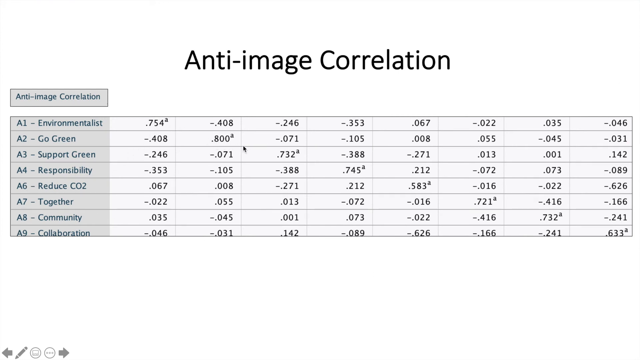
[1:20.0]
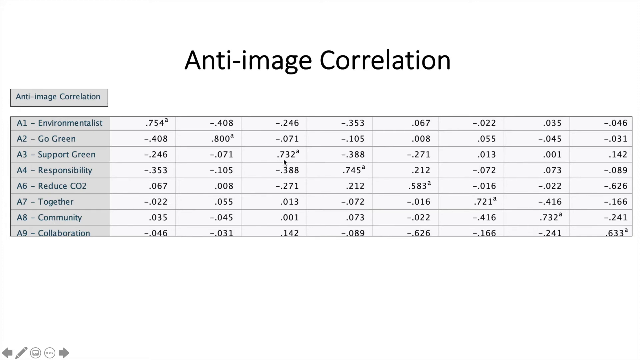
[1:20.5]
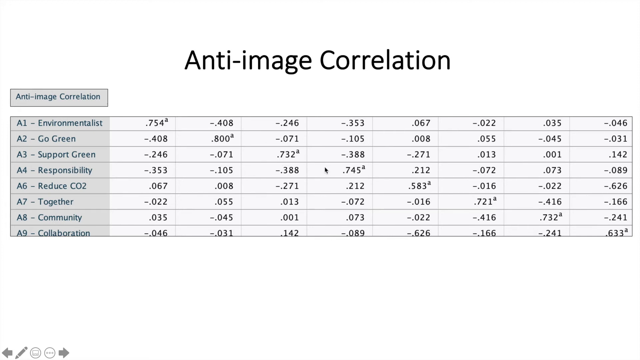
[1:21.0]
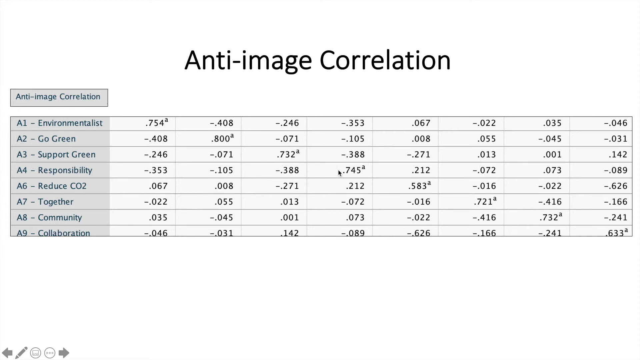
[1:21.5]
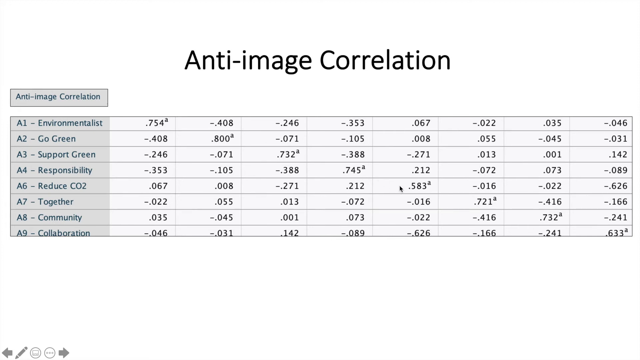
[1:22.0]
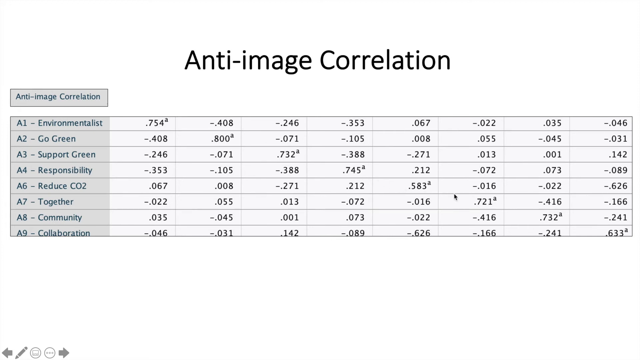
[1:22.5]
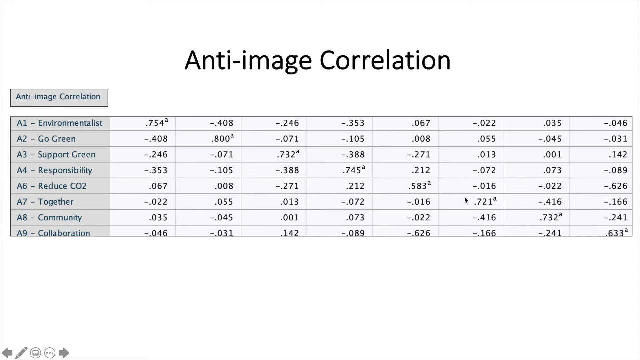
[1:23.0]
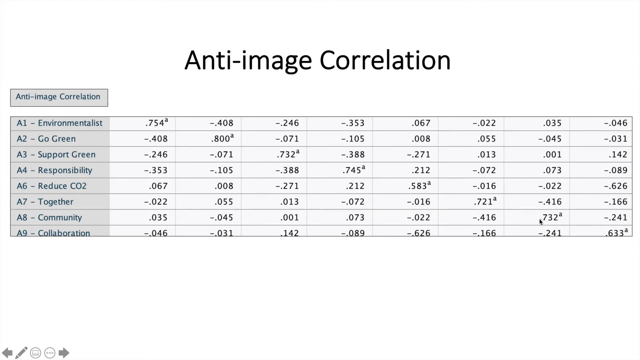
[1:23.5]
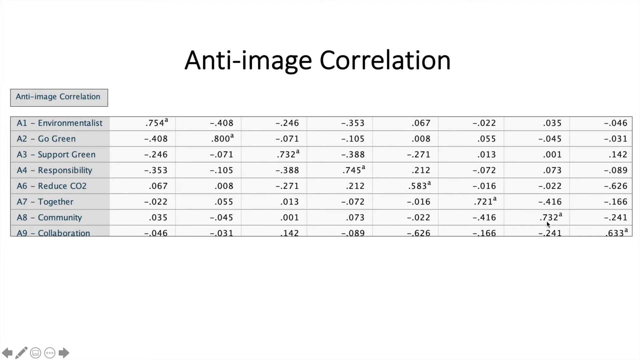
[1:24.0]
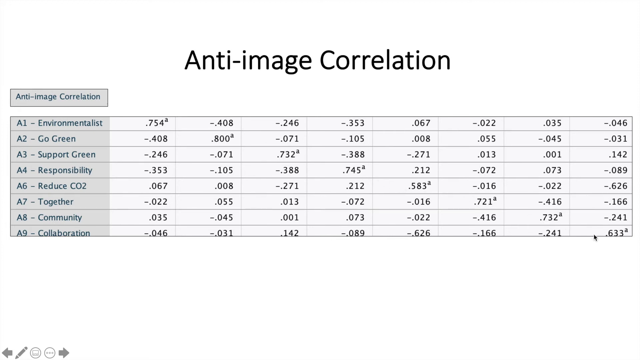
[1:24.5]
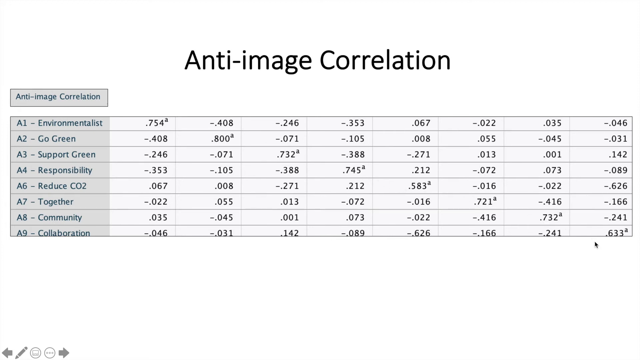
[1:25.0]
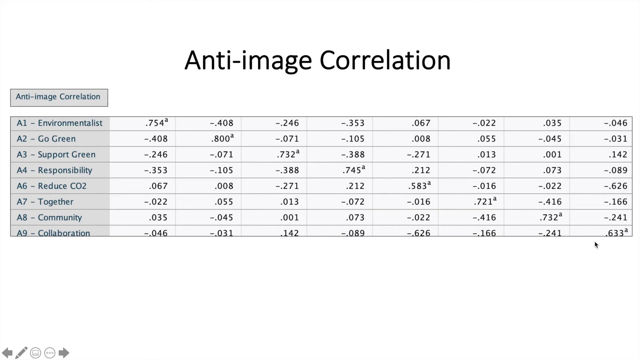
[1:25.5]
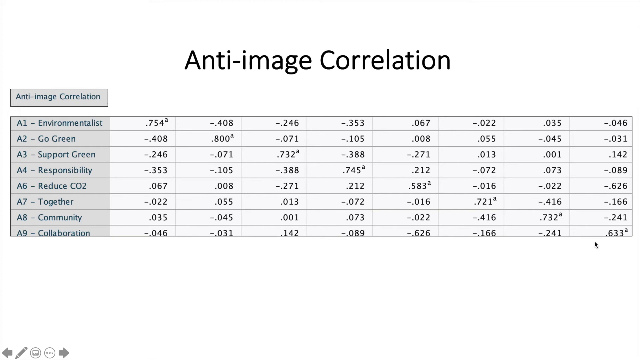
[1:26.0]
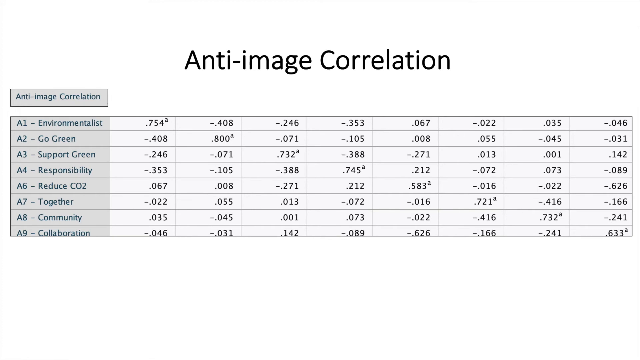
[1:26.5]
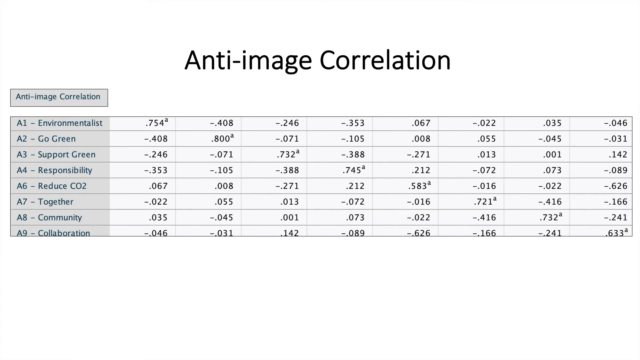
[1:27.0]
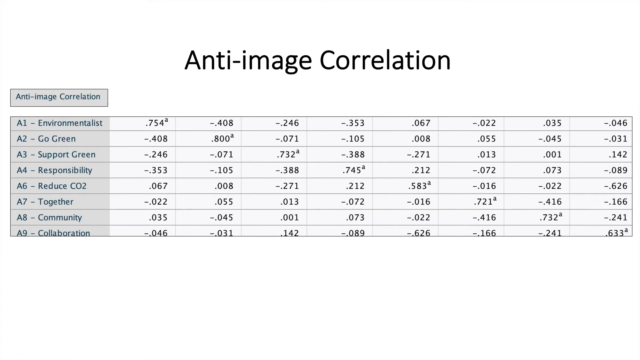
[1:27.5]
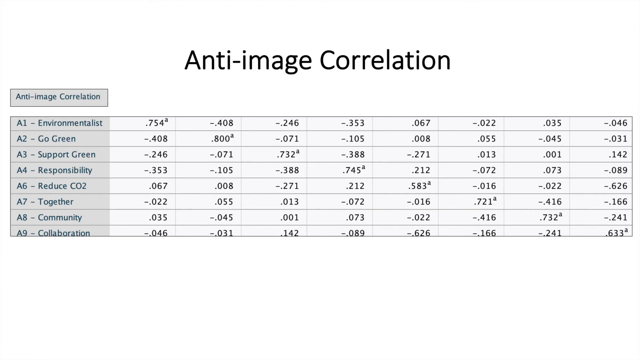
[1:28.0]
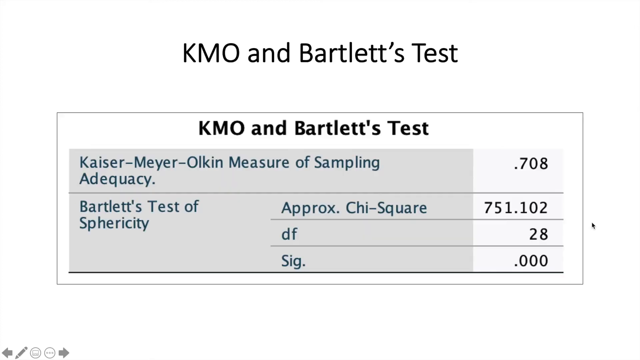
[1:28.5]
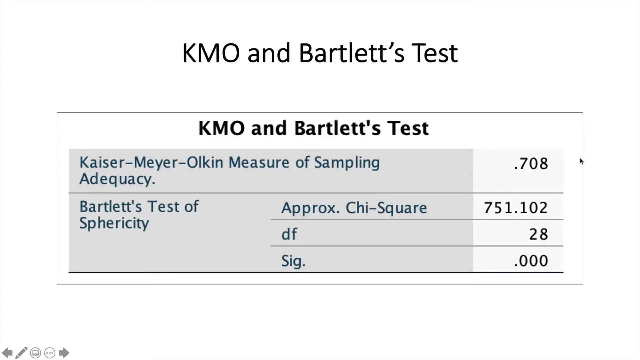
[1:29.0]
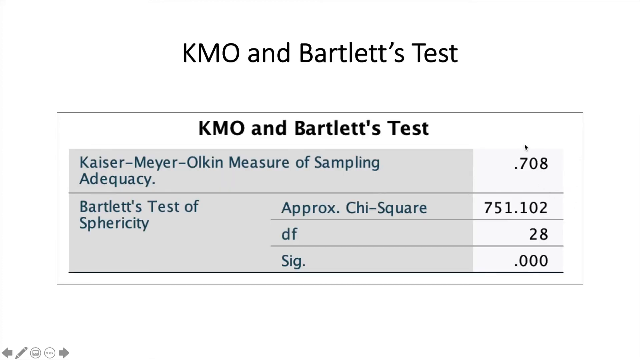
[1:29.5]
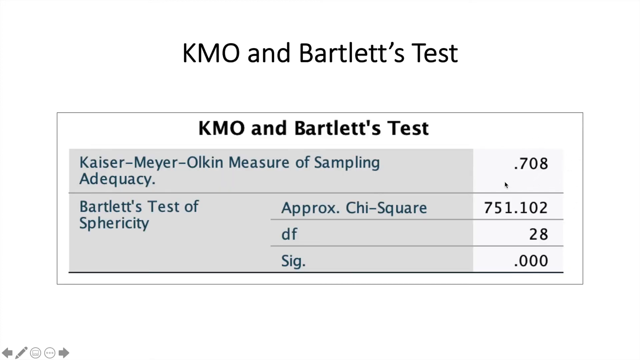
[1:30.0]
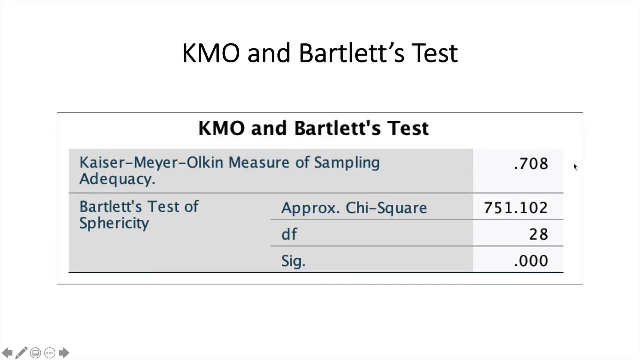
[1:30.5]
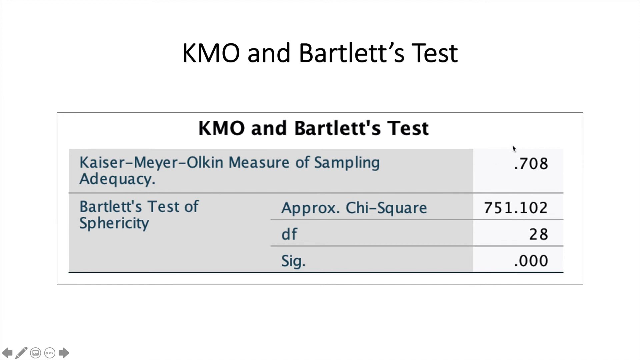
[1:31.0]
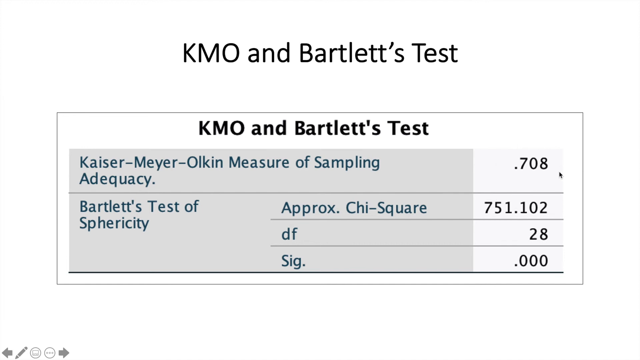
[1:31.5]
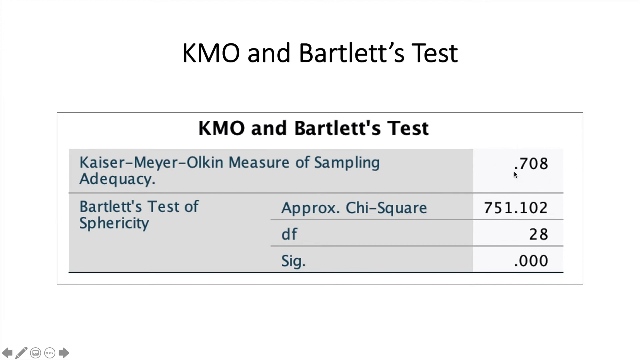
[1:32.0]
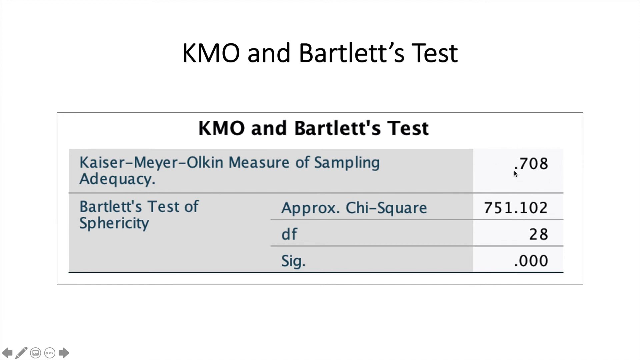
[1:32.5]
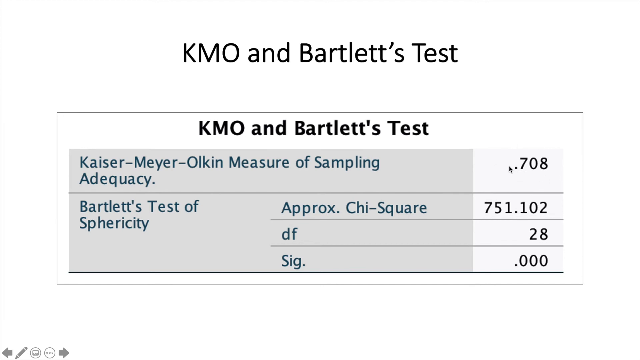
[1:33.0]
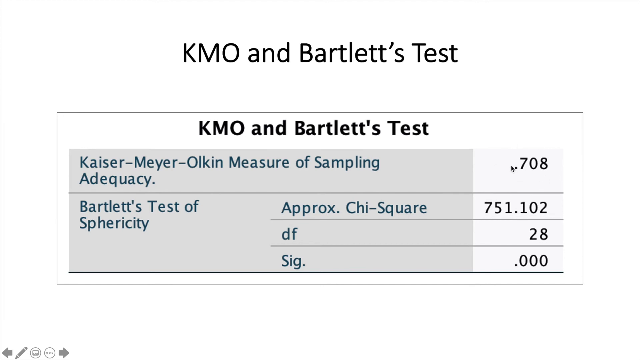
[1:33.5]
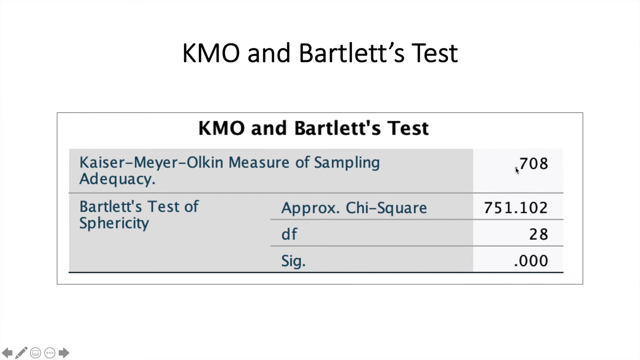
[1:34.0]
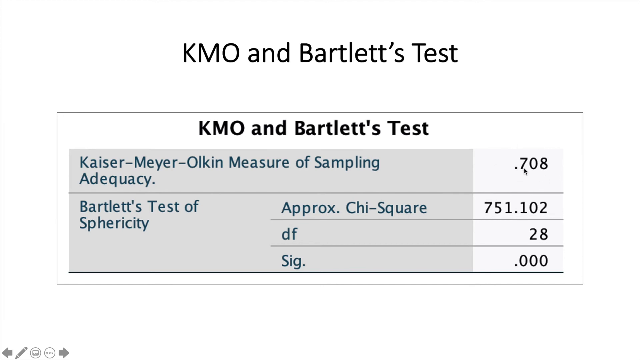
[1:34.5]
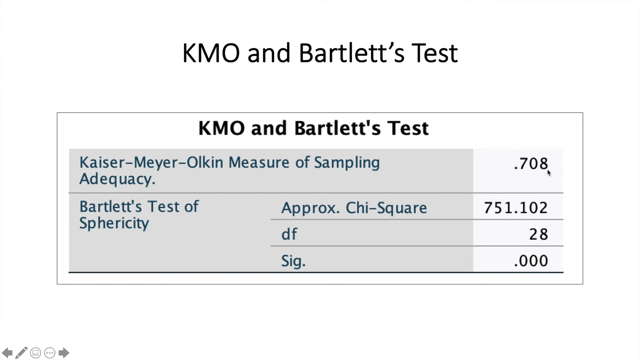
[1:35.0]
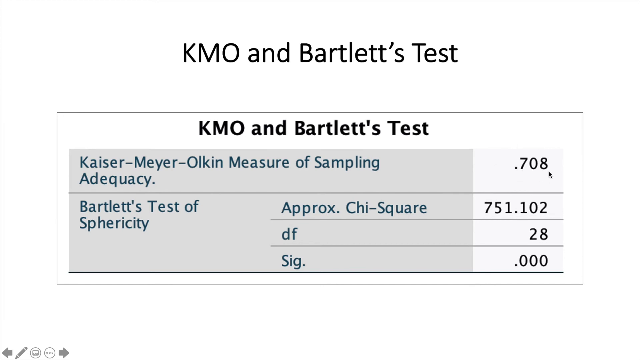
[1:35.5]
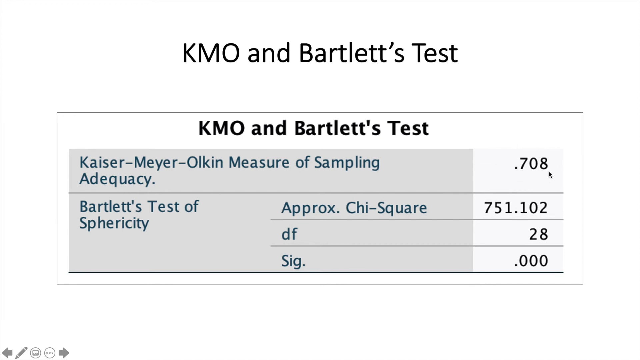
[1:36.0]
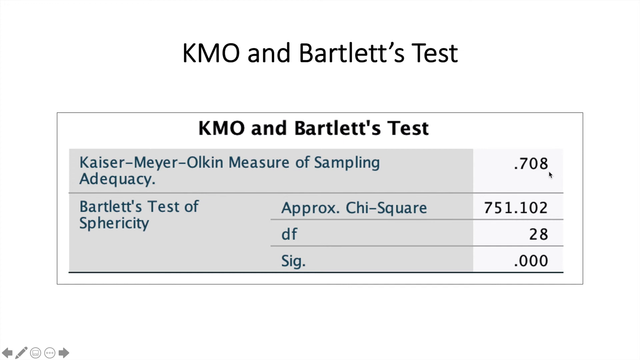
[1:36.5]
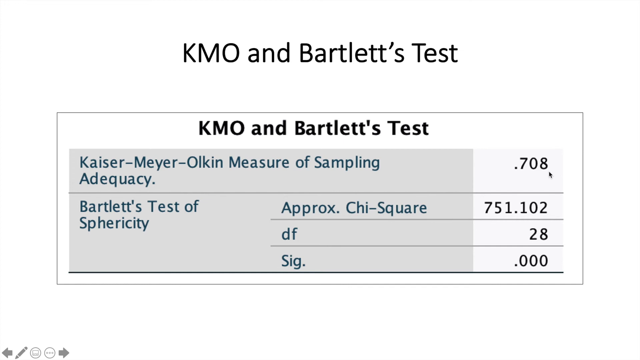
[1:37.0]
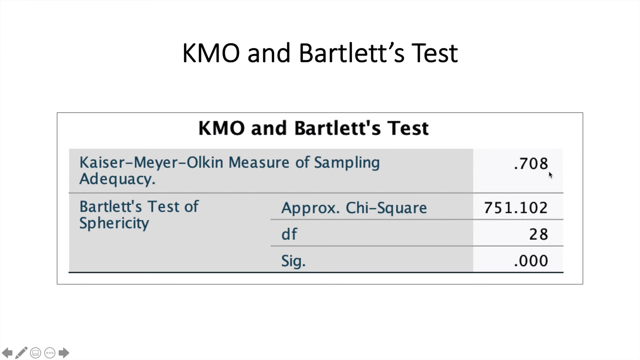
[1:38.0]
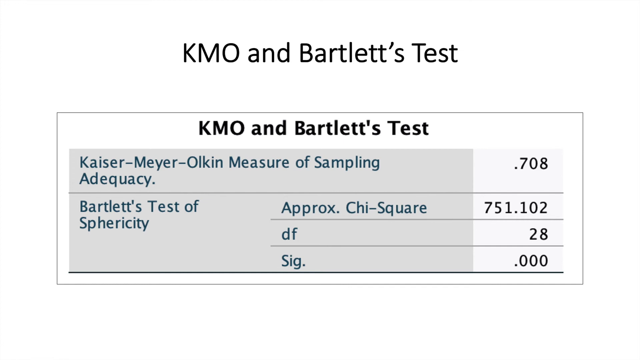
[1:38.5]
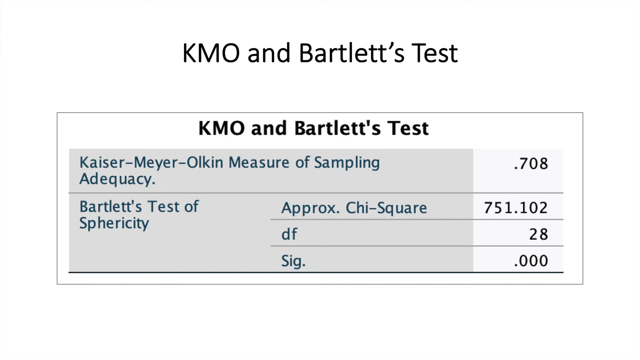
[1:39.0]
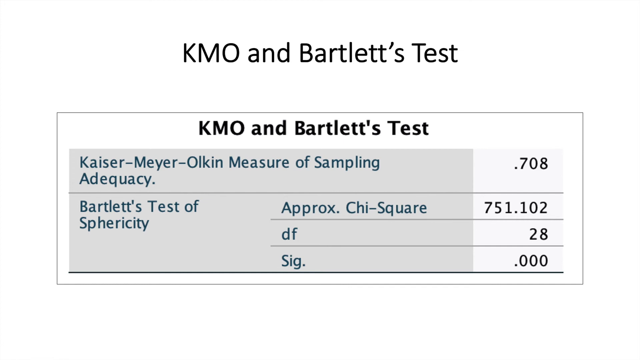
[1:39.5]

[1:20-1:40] A slideshow slide with a white background is titled "anti-image correlation". Below the title is a gray box with a black outline reading "anti-image correlation". Below this box is a chart whose first column has dark gray boxes listing, from top to bottom: "A1 environmentalist", "A2 go green", "A3 support green", "A4 responsibility", "A6 reduce CO2", "A7 together", "A8 community", and "A9 collaboration". Various decimal values are to the right of these words. The cursor moves on screen. The scene then transitions to another slide titled "KMO and Bartlett's test". Below the title is a chart whose title, "KMO and Bartlett's test", is in bold black. Below that is a gray rectangle with a line ending "of sampling adequacy", and below that "Bartlett's test of sphericity".